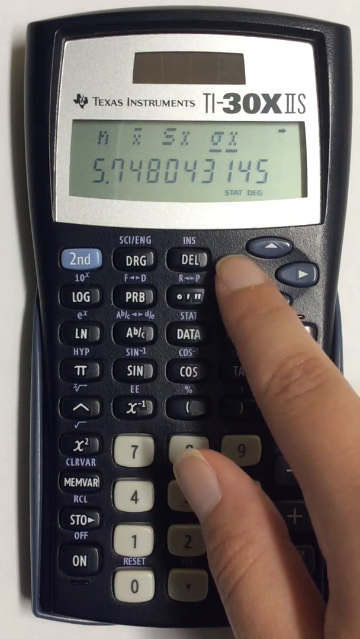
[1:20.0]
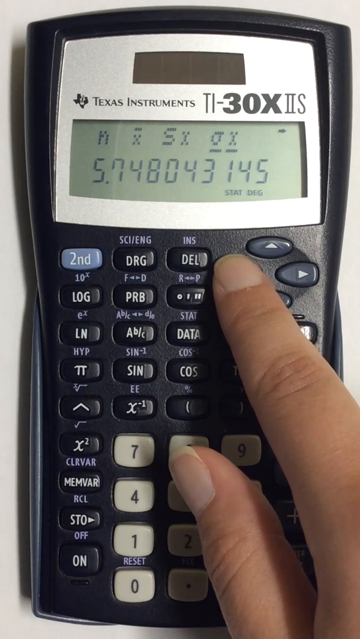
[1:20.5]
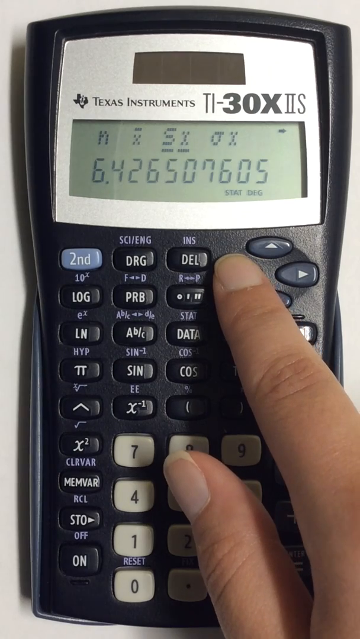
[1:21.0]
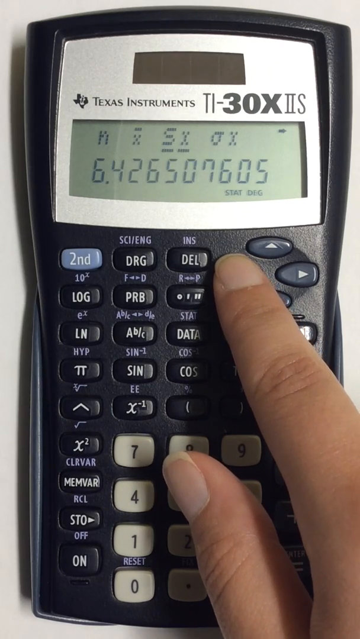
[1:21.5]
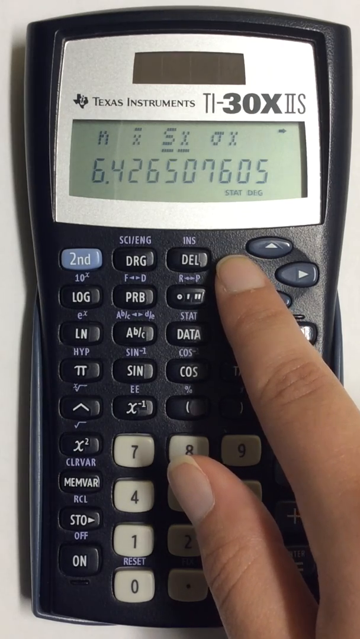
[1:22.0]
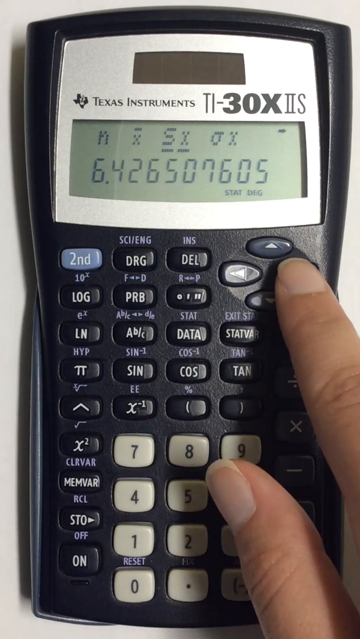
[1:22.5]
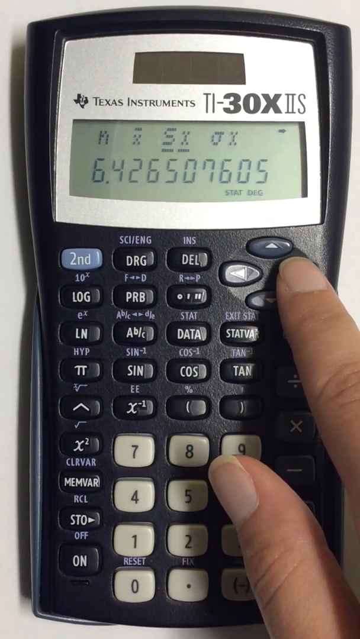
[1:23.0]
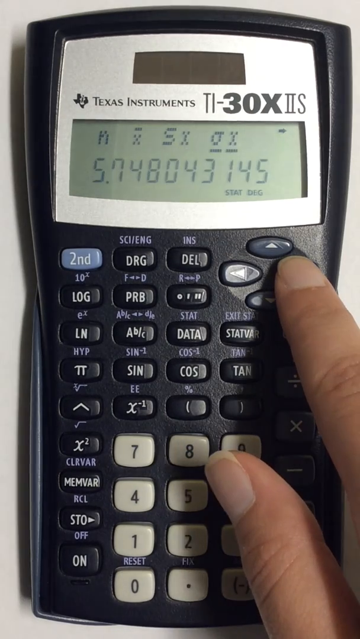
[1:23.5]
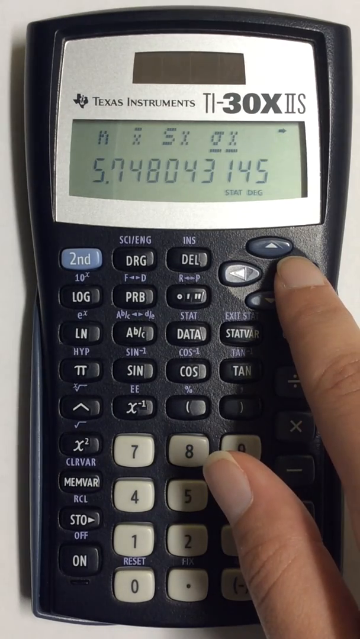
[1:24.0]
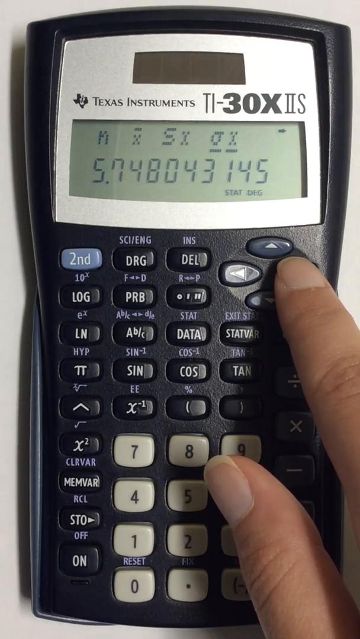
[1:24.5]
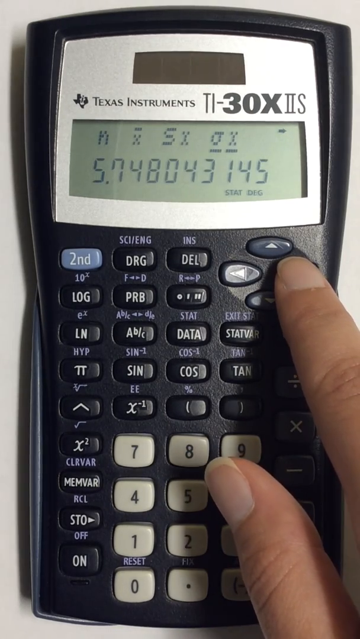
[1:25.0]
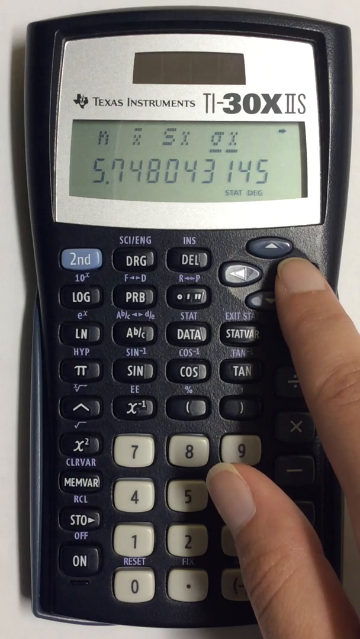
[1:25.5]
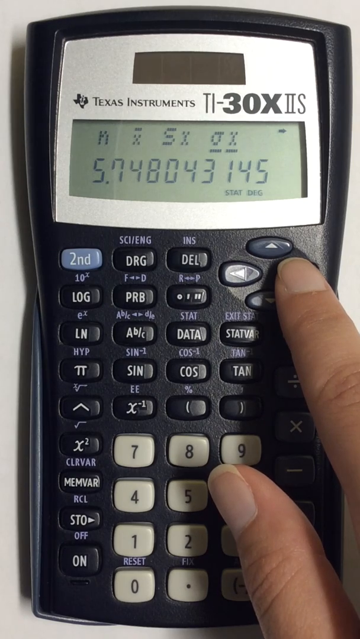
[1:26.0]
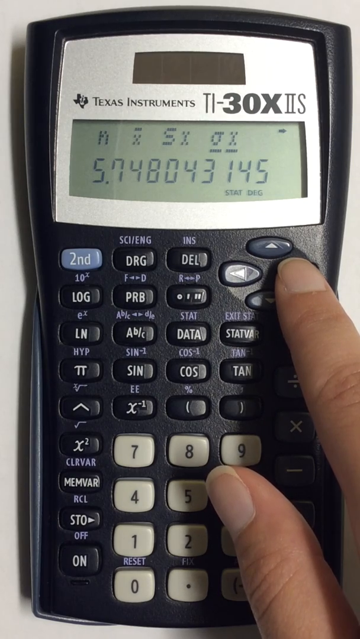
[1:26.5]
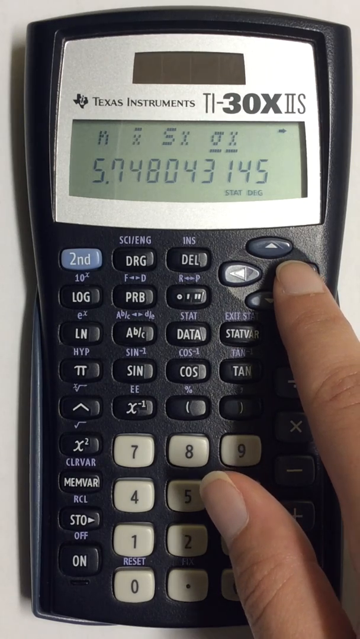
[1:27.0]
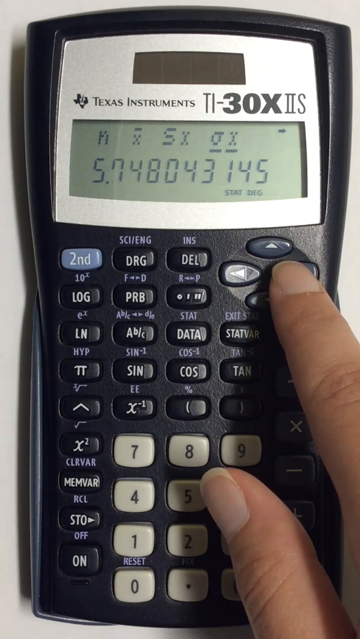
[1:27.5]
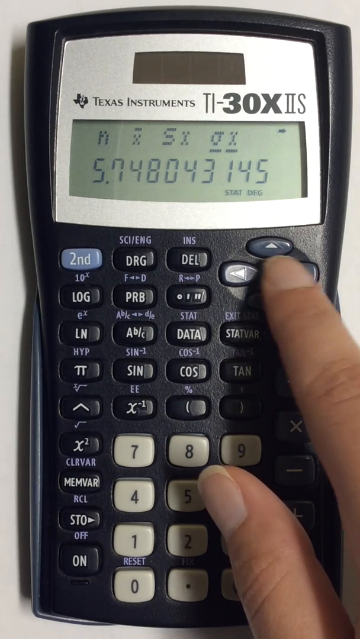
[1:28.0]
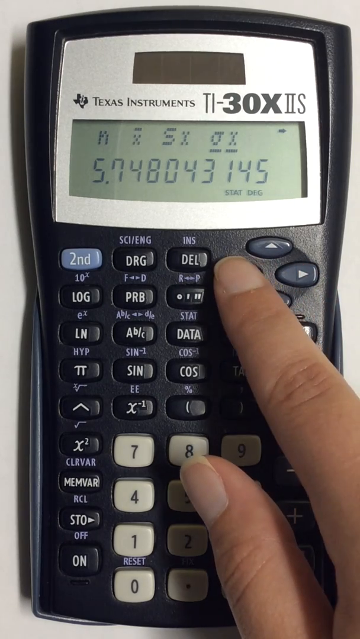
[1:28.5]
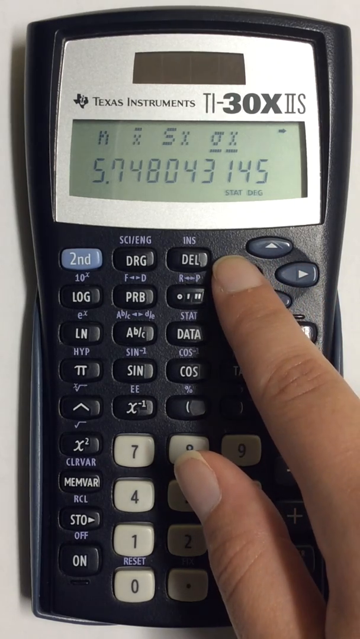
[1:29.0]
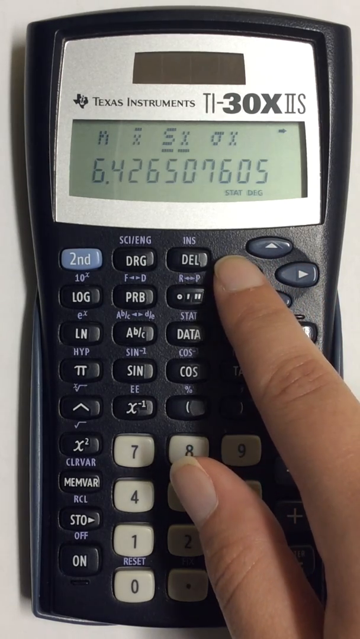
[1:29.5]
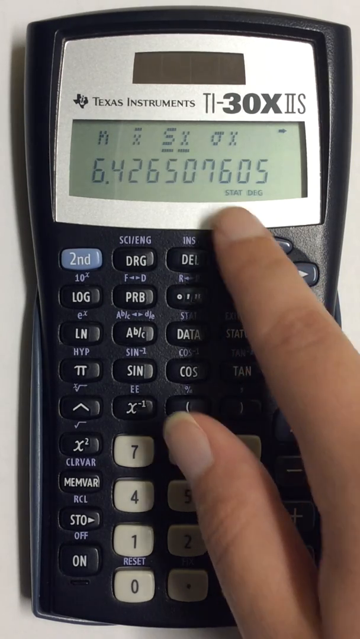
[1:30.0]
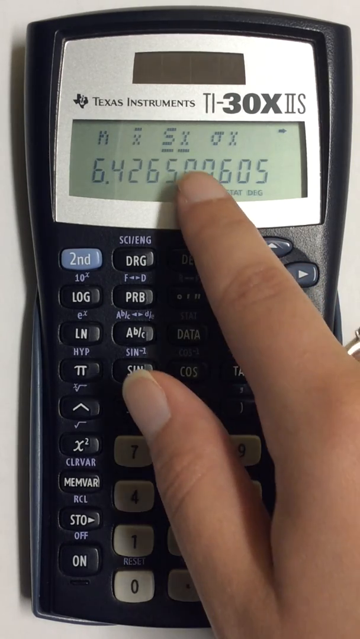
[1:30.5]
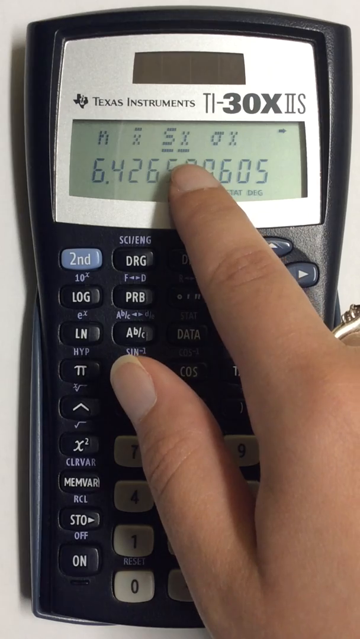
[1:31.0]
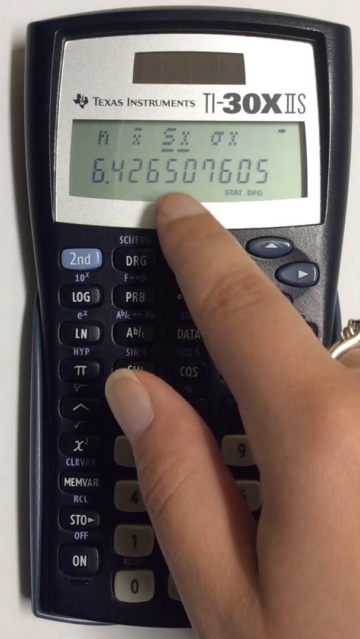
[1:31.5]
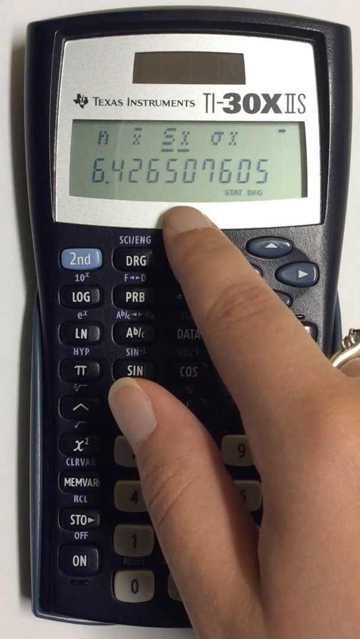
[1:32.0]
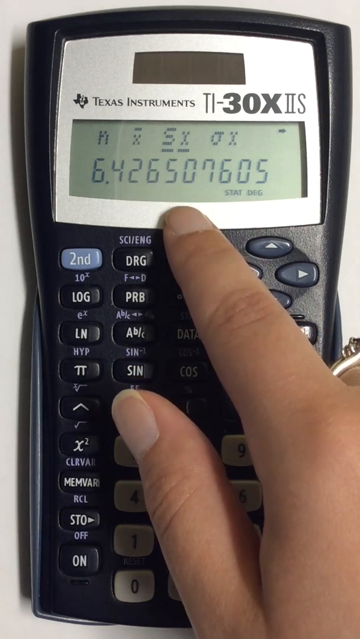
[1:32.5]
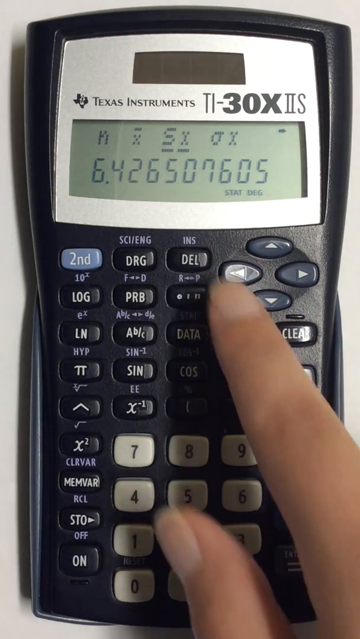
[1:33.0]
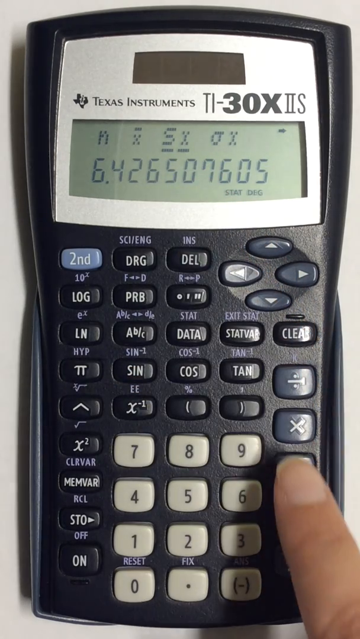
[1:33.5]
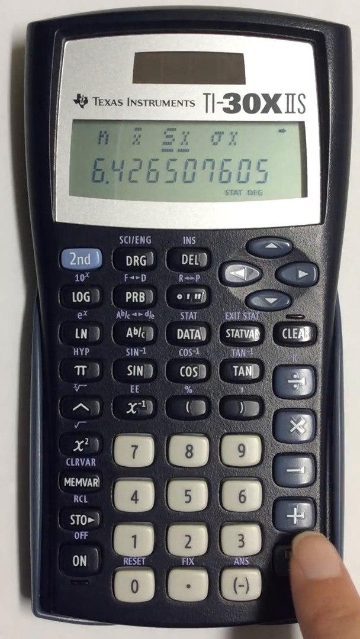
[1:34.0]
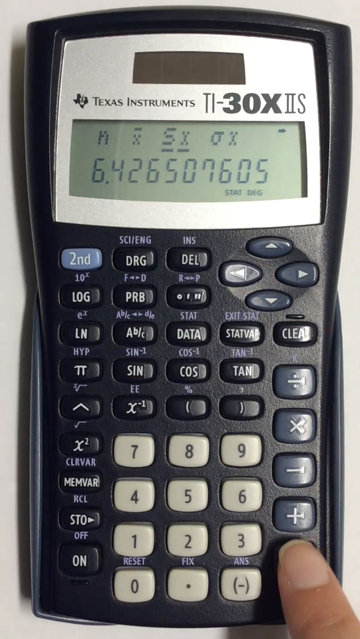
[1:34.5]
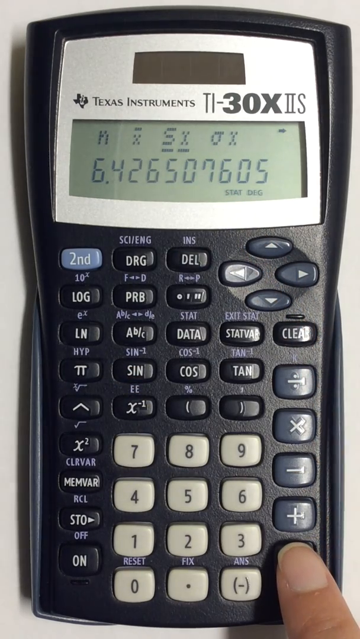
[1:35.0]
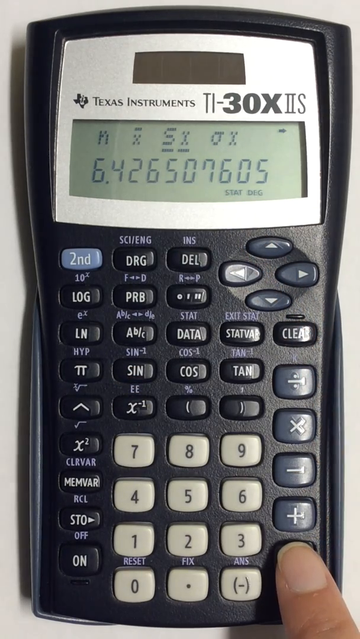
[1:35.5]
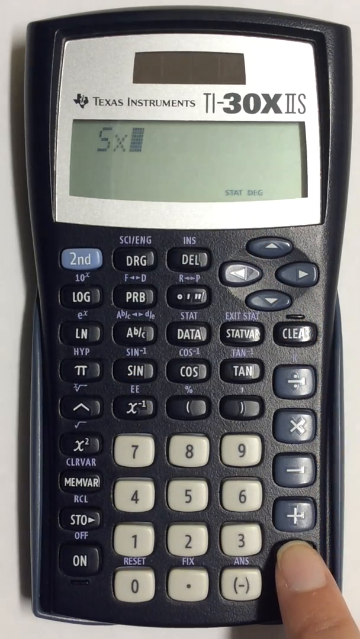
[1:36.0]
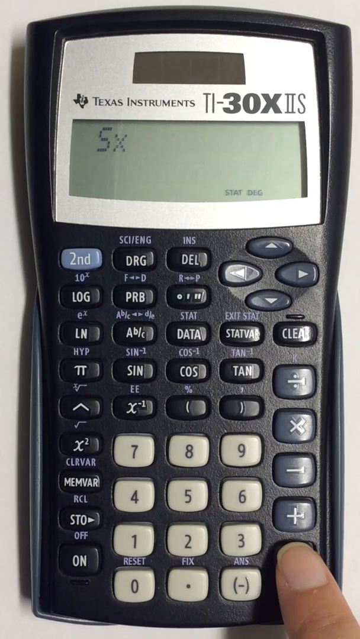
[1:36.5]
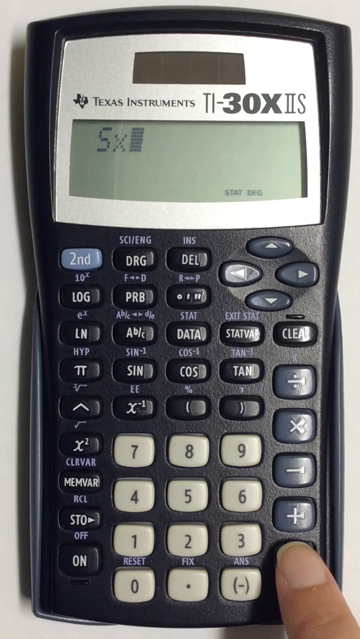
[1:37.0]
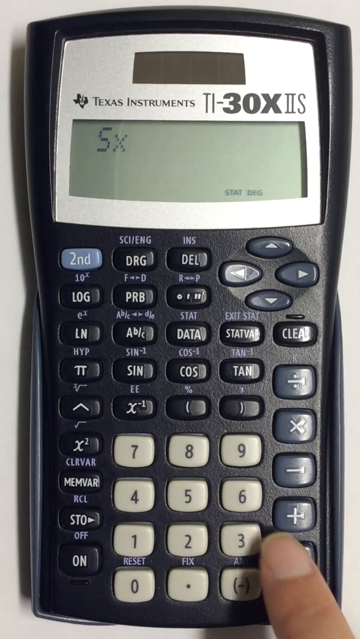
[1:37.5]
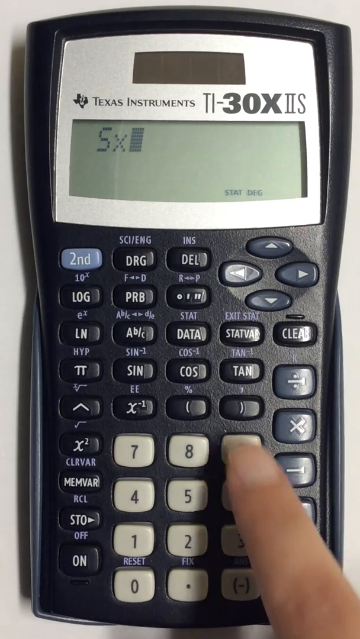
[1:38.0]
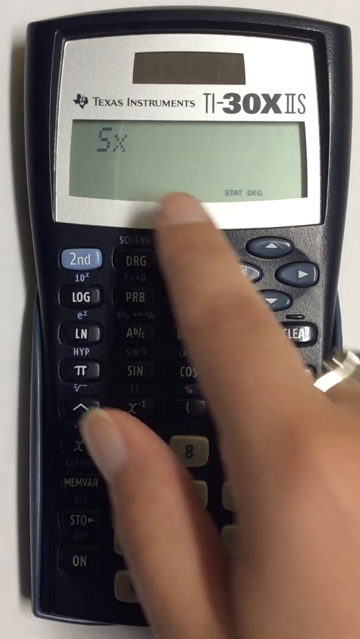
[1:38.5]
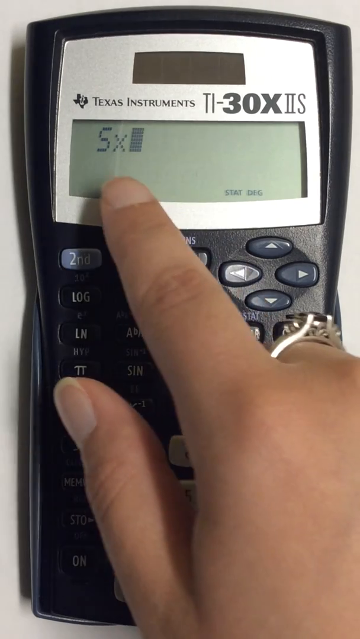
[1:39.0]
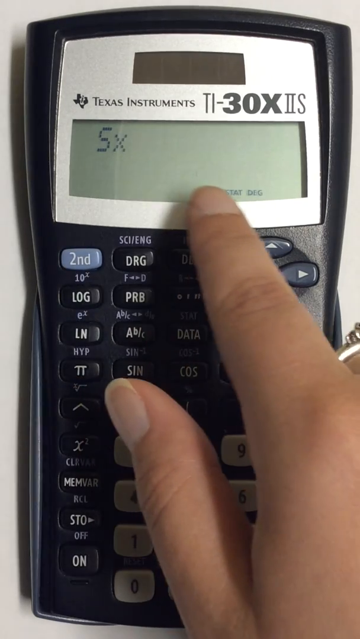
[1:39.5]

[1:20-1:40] A blue and silver Texas Instruments 30X2 calculator has a display screen at the top showing some symbols and the number 5.748043145. There are dark blue buttons with various symbols, a lighter blue button that says "second", and white-gray buttons with numbers such as 0, 1, 2, 4, 7 and 9. A person's hand pushes the left arrow, and the display shows 6.426507605. They press right, and it shows 5.748043145; they press left again, and it shows 6.426507605. The person points at the display, then moves down to the equal button and presses it, and "SX" appears on the screen. They then point at it on the display.